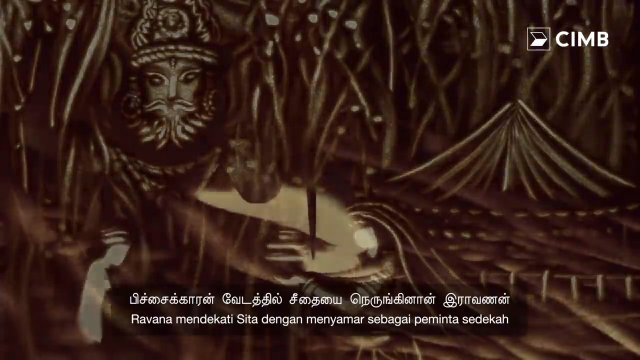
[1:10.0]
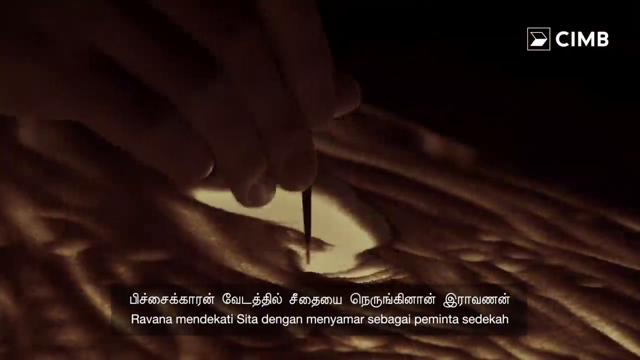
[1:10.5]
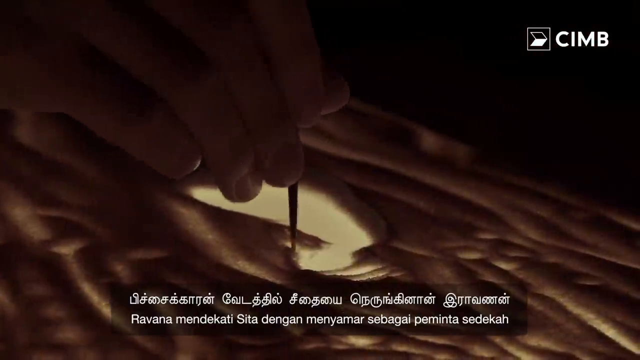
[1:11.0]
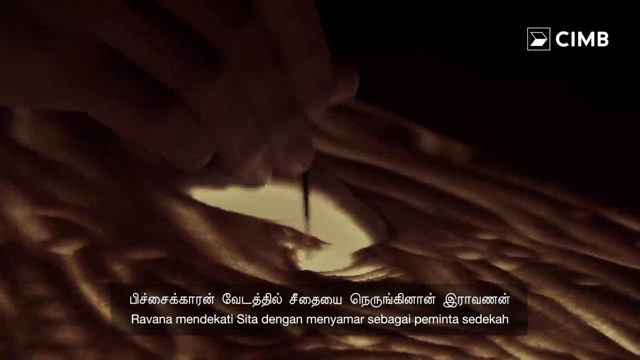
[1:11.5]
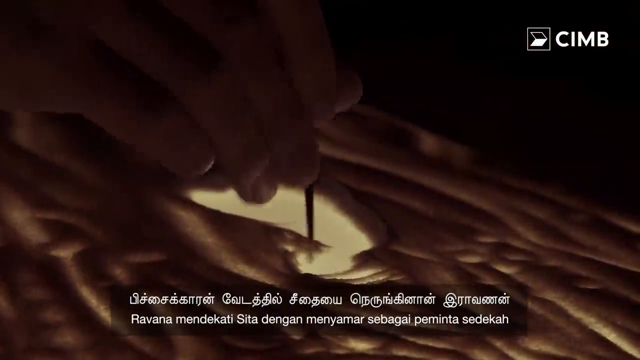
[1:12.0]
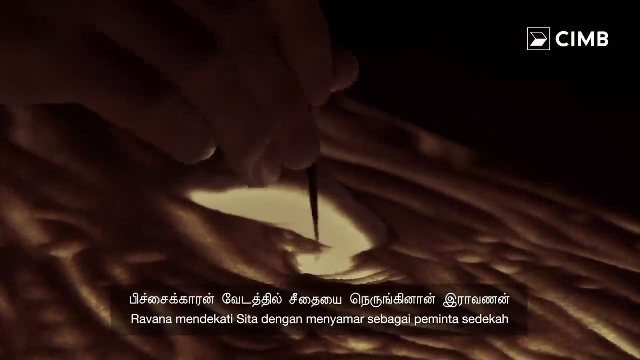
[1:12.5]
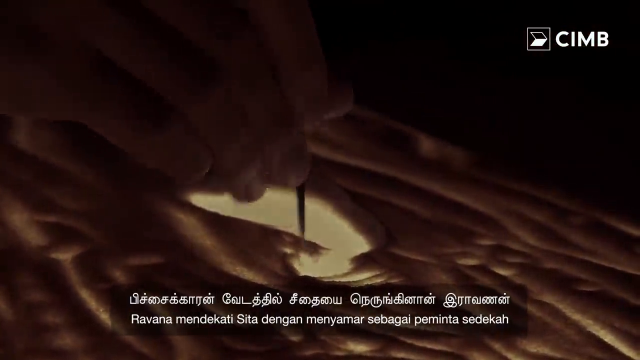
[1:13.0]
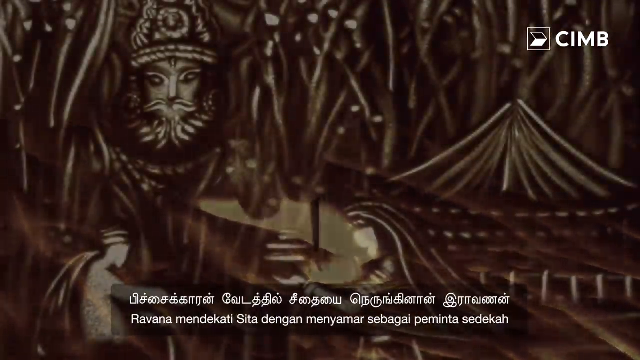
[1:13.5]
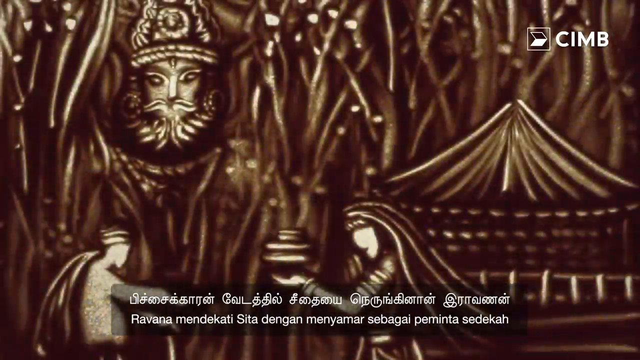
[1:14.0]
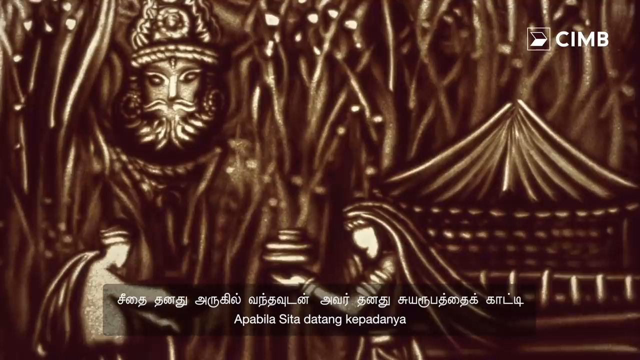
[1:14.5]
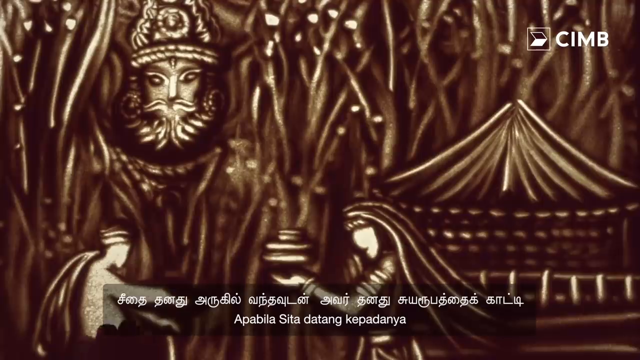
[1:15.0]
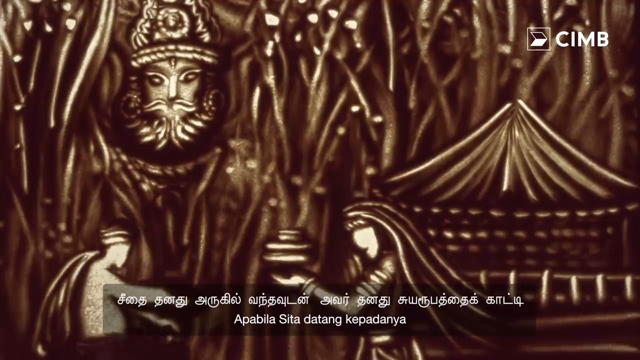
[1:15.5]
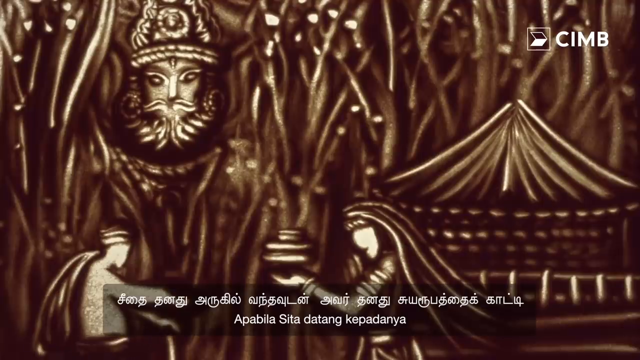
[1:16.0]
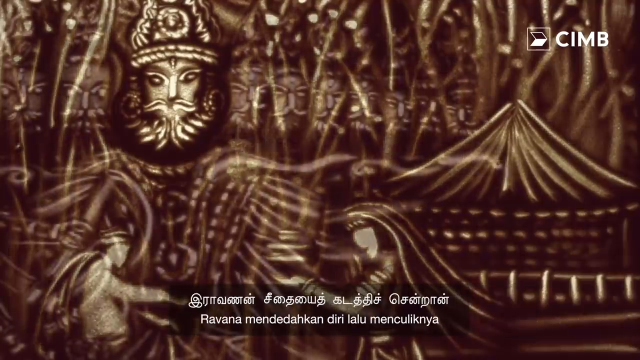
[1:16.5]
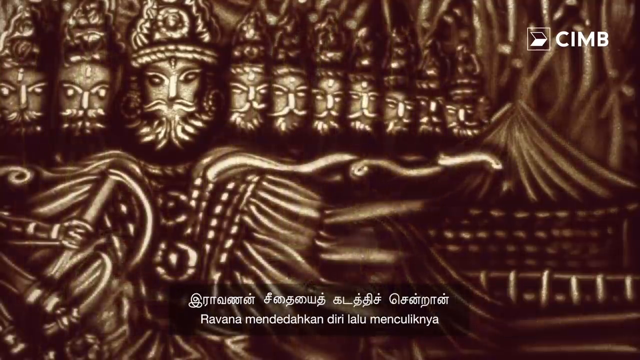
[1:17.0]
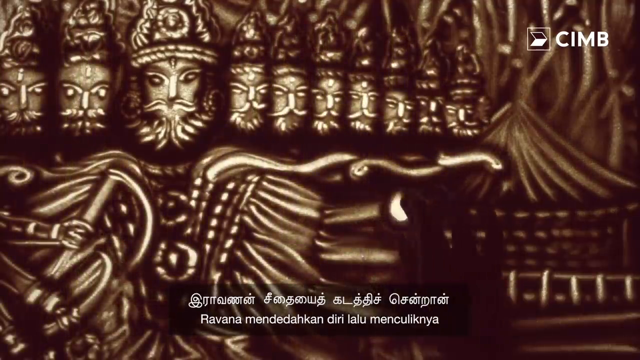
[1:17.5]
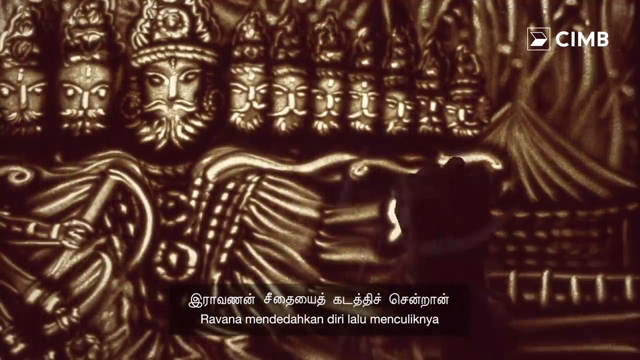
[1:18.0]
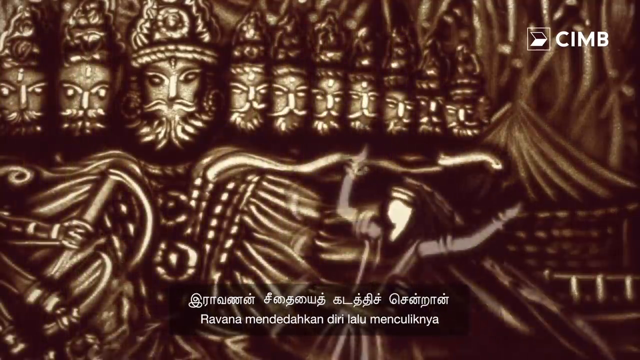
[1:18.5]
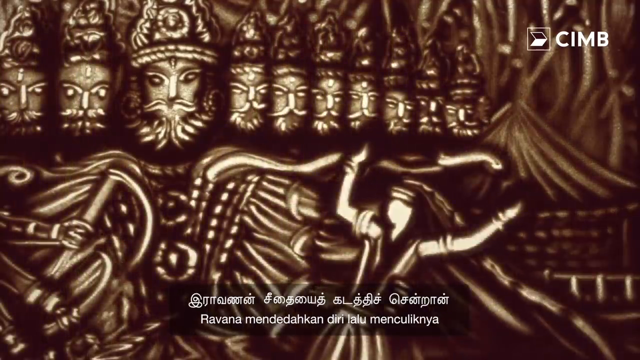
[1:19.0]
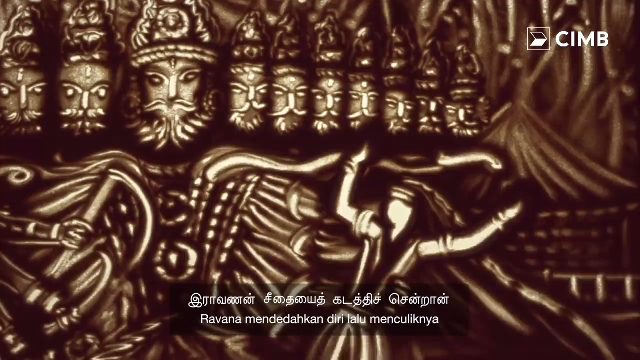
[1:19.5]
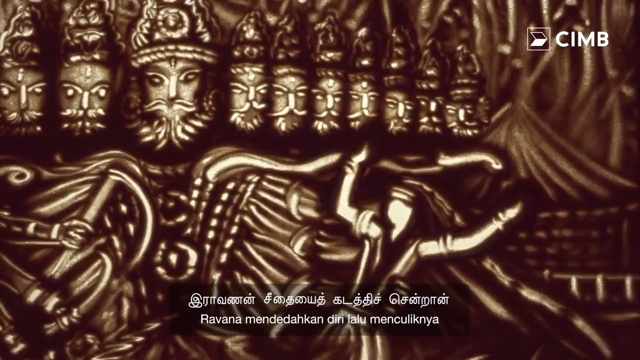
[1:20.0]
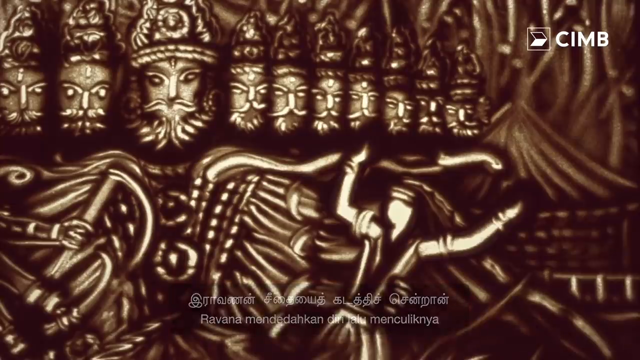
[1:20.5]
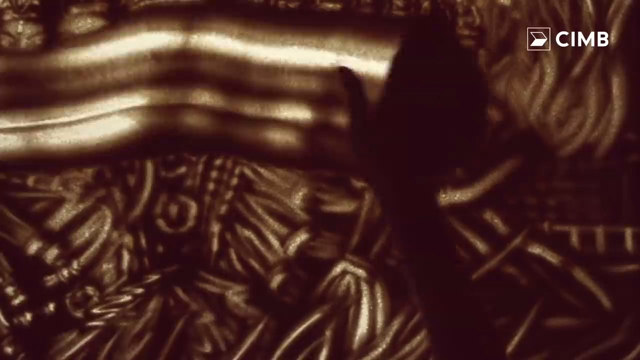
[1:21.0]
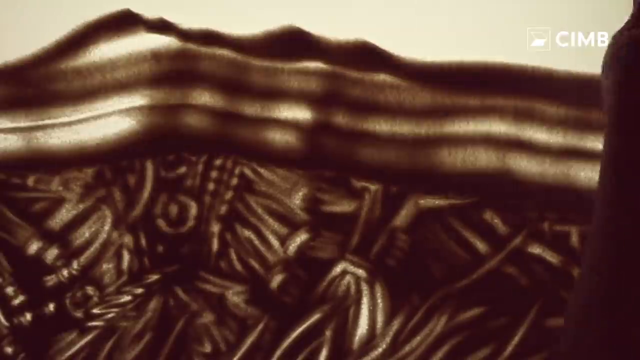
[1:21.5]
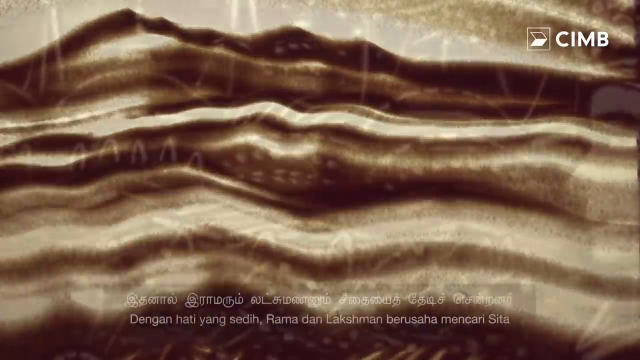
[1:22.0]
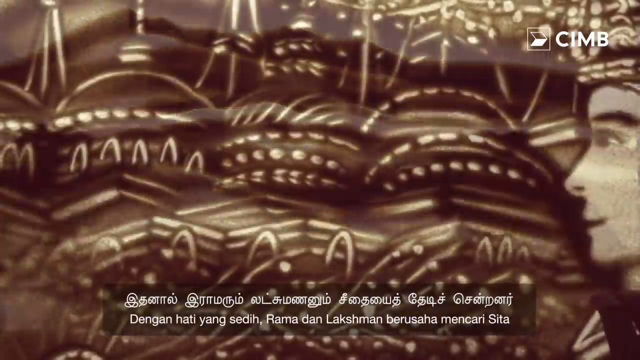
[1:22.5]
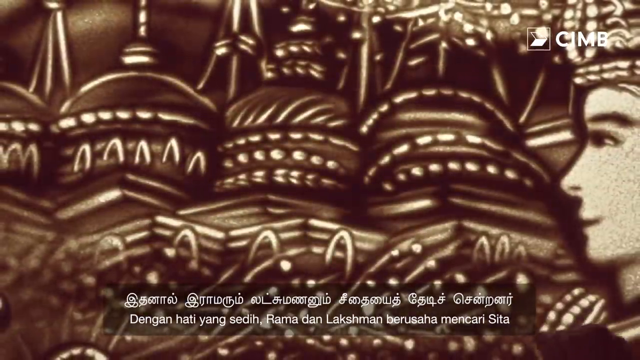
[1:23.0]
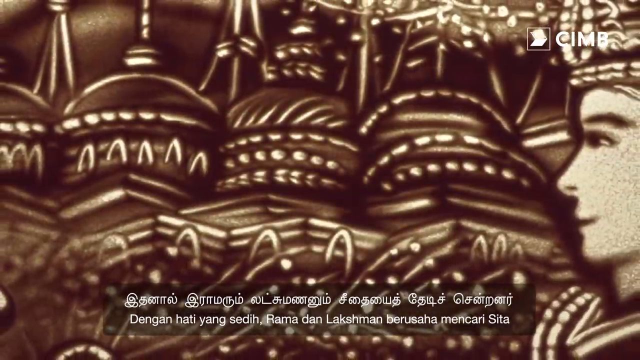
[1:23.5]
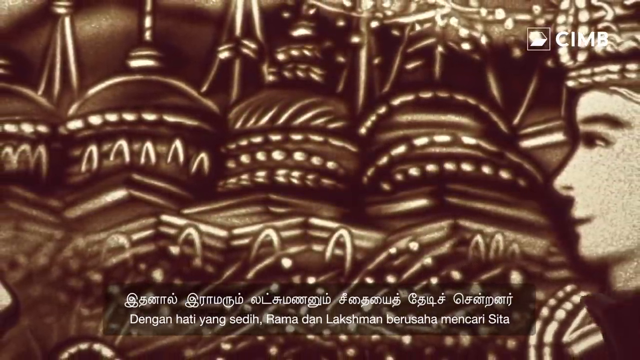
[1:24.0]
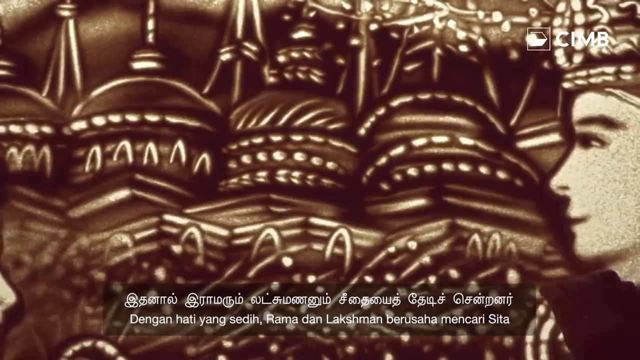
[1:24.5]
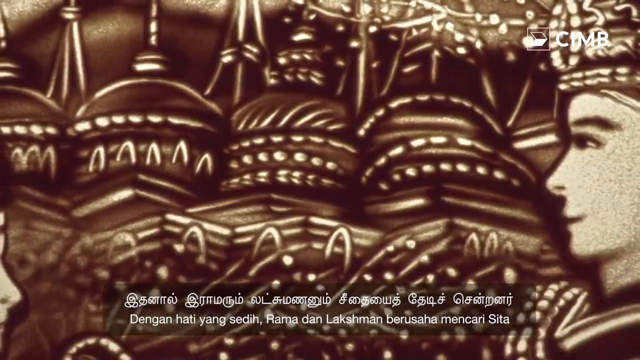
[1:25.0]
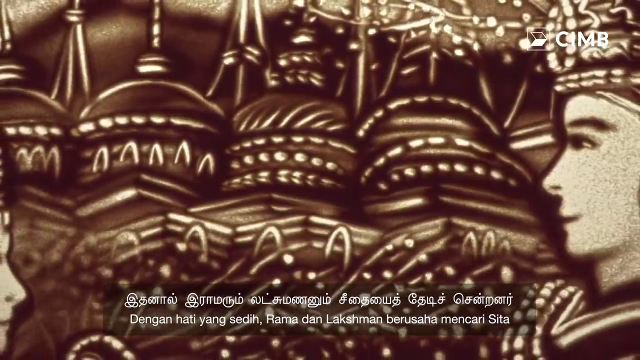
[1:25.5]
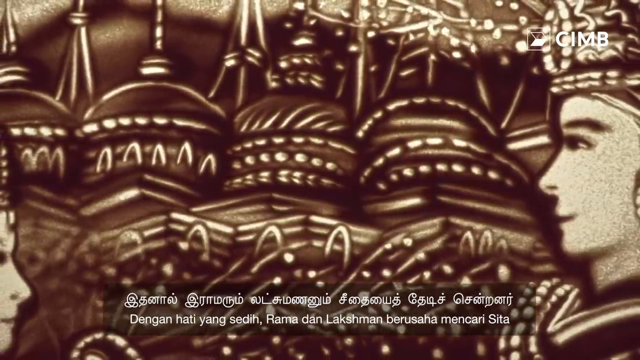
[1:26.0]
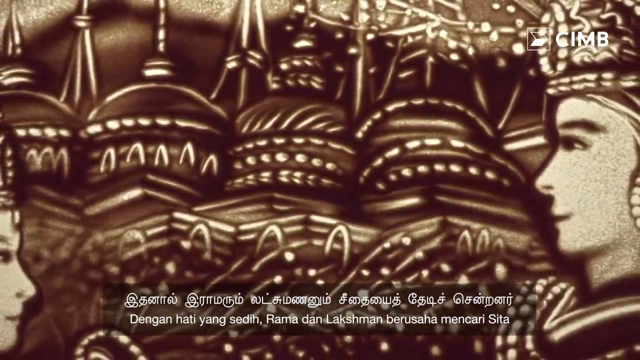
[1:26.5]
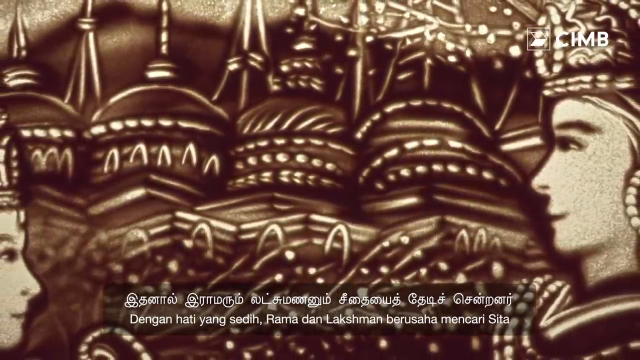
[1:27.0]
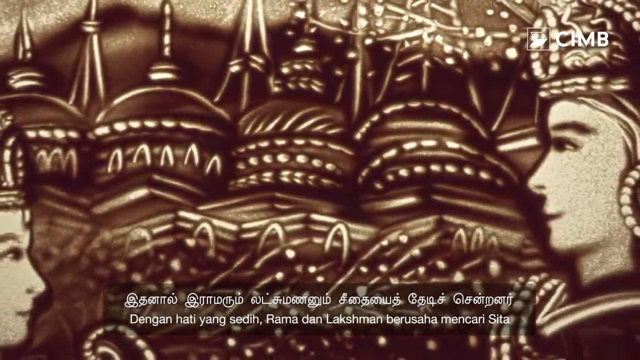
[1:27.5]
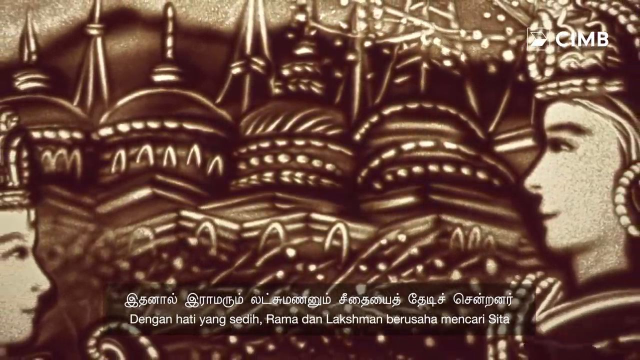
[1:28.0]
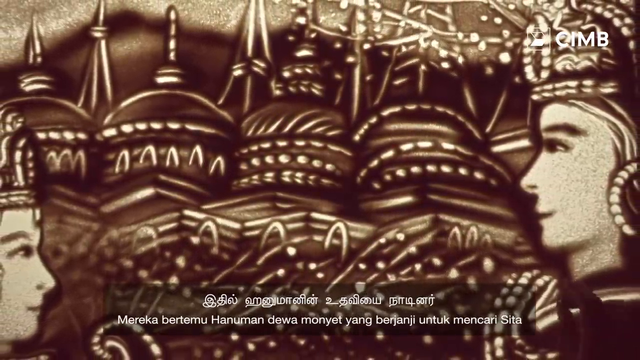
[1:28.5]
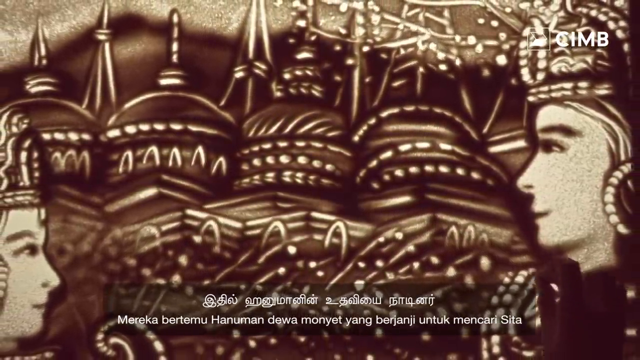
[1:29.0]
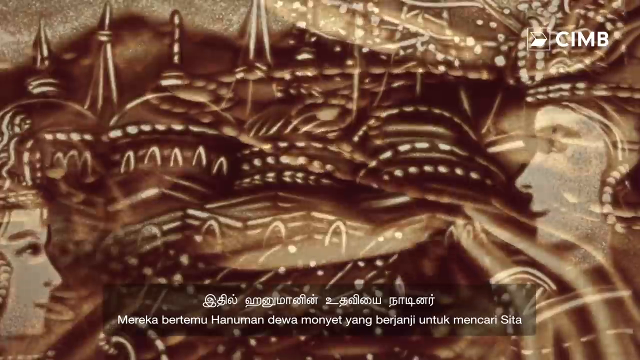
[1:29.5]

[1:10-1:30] Someone's hand holds a pencil, moving some of the sand very finely on the artwork. The king appears with a woman kneeling and holding some plates, a tent on the right of the screen in the background, and another figure on the left of the screen. The same king face is then multiplied, with numerous king faces, eight to ten of them, in the scene. The details change to show a different woman-like figure. Next, there is a side profile of a face on the right and a side profile of a face on the left, with different designs in the middle that look like small cylindrical palaces. The artwork keeps changing, with hands and fingers creating changes to the art throughout.